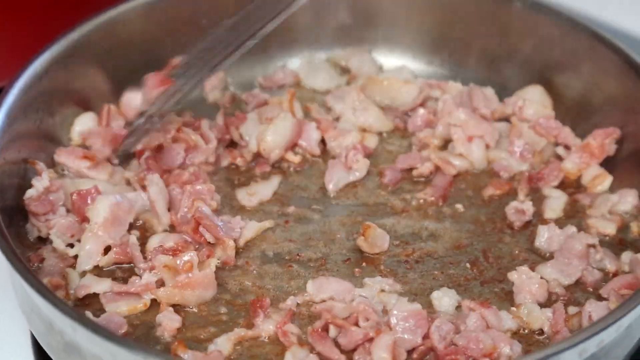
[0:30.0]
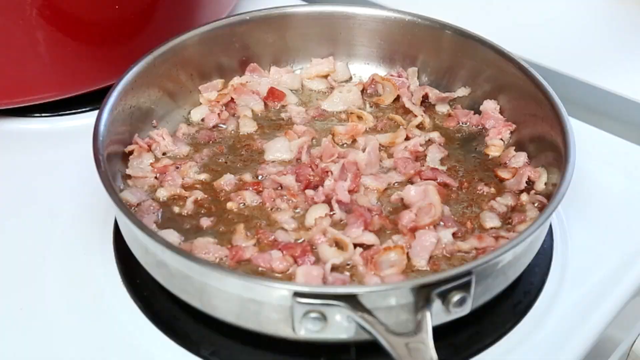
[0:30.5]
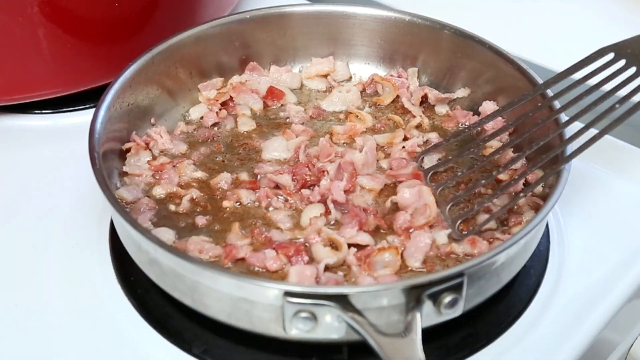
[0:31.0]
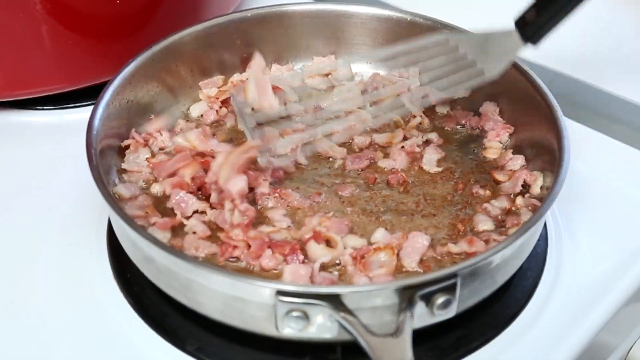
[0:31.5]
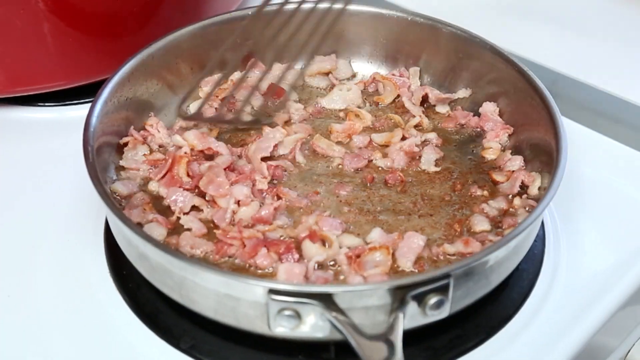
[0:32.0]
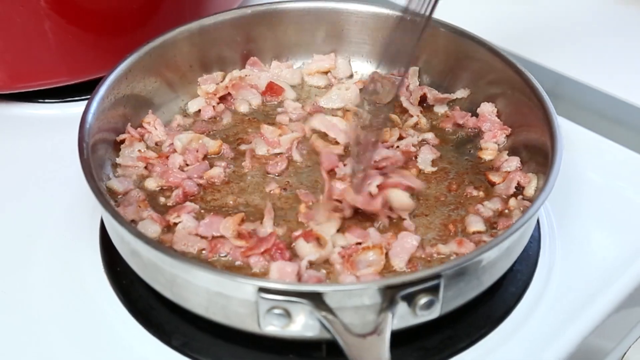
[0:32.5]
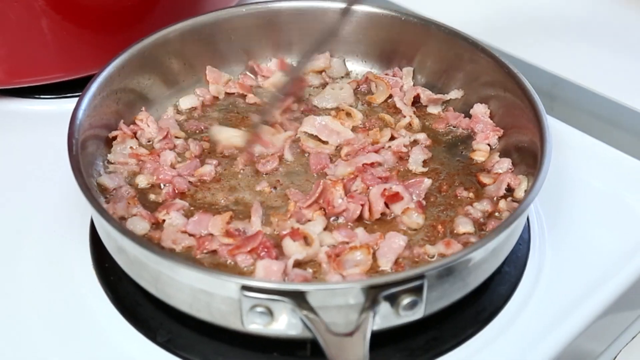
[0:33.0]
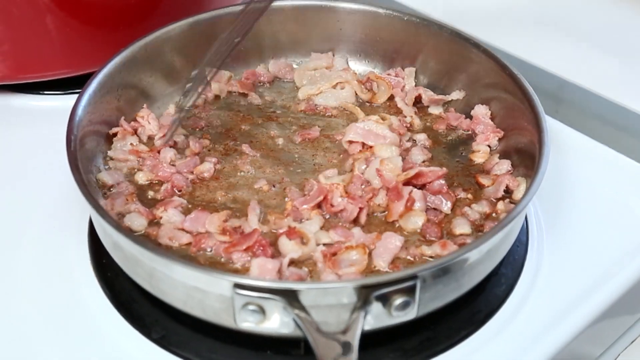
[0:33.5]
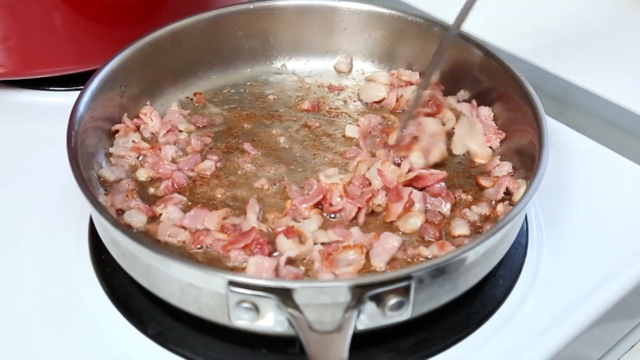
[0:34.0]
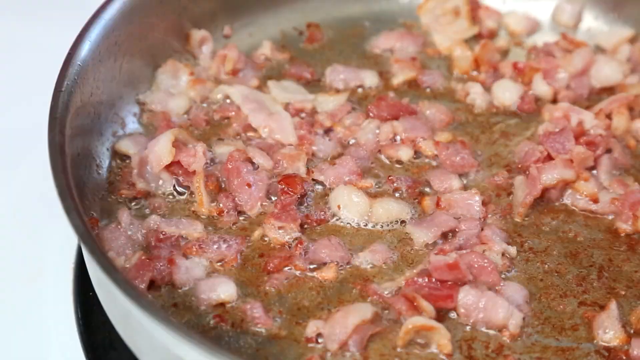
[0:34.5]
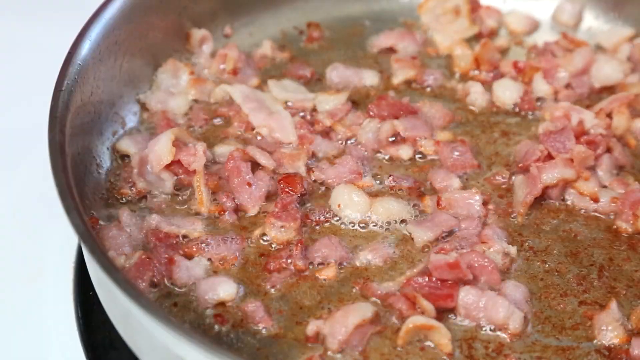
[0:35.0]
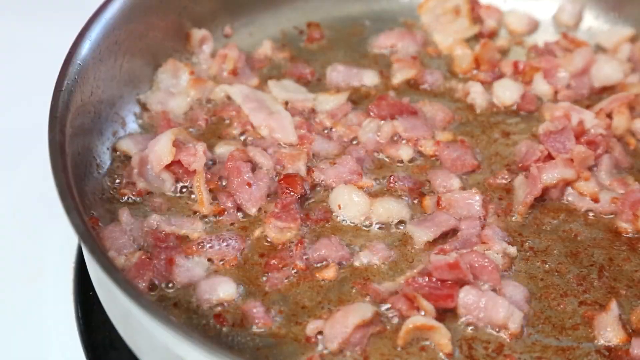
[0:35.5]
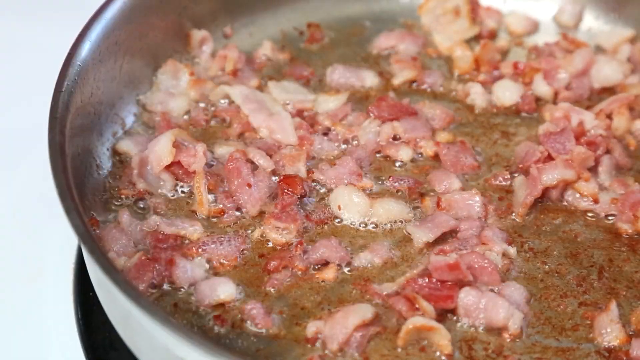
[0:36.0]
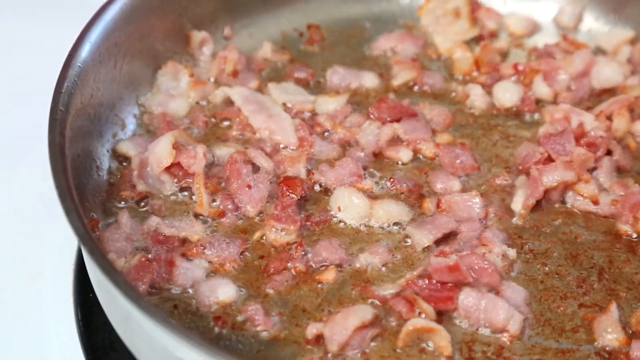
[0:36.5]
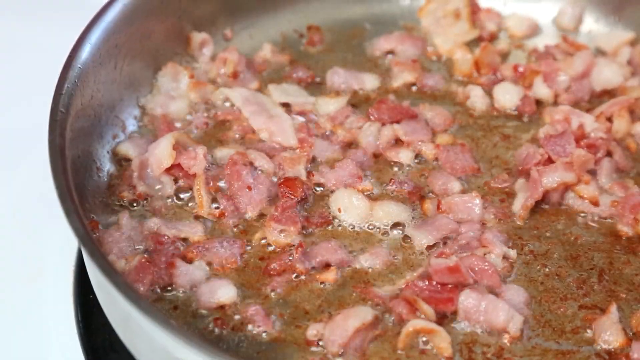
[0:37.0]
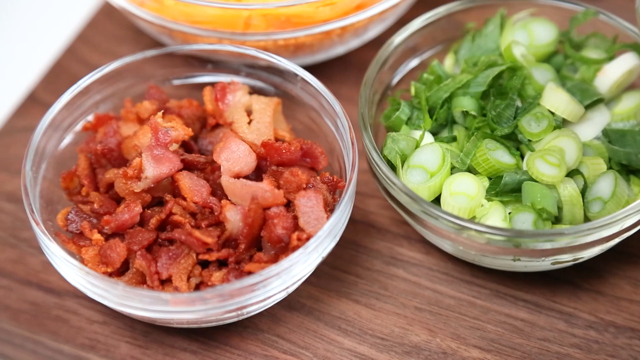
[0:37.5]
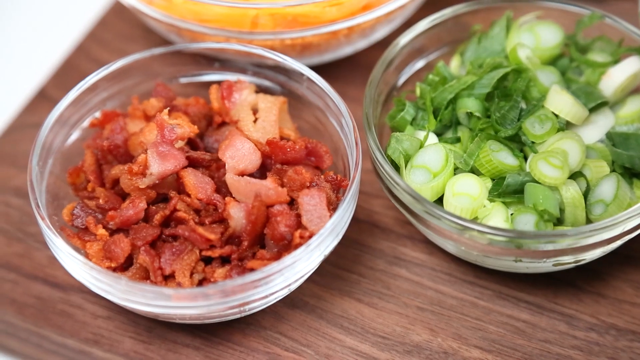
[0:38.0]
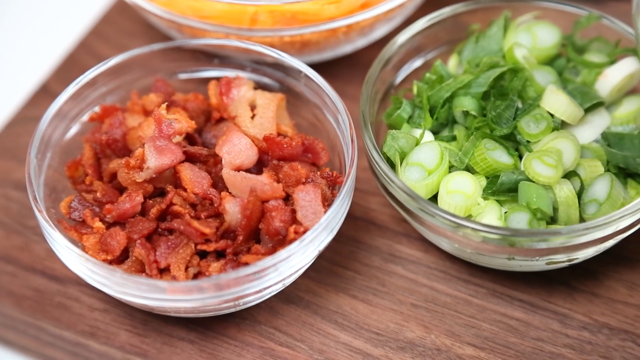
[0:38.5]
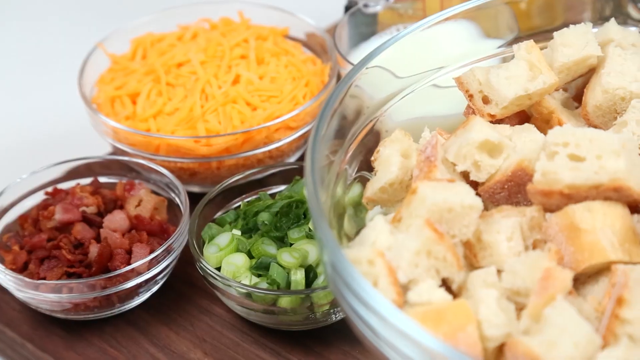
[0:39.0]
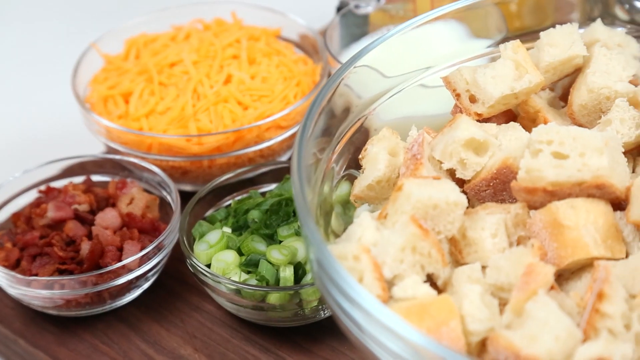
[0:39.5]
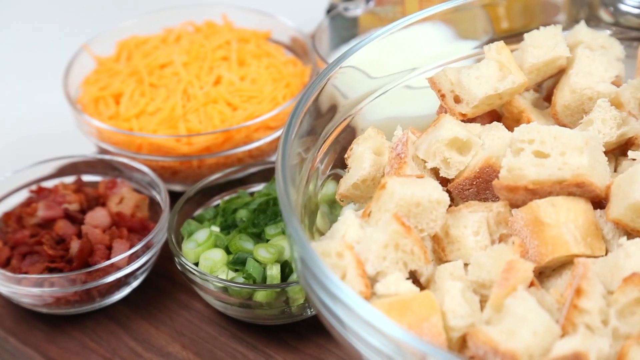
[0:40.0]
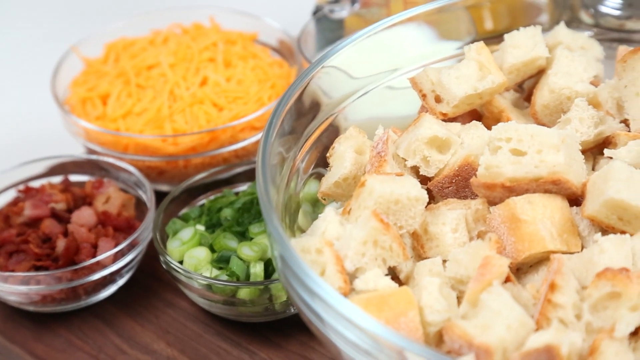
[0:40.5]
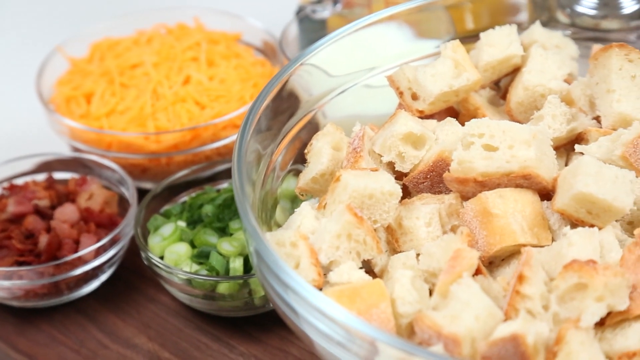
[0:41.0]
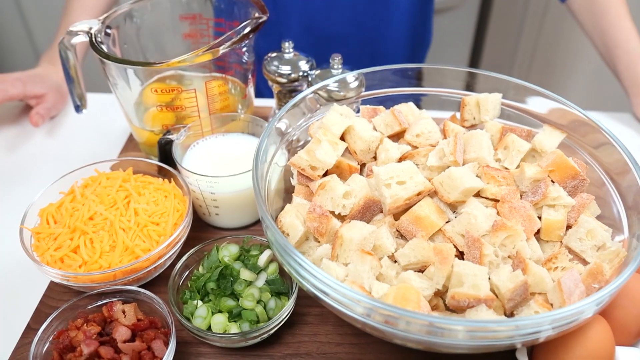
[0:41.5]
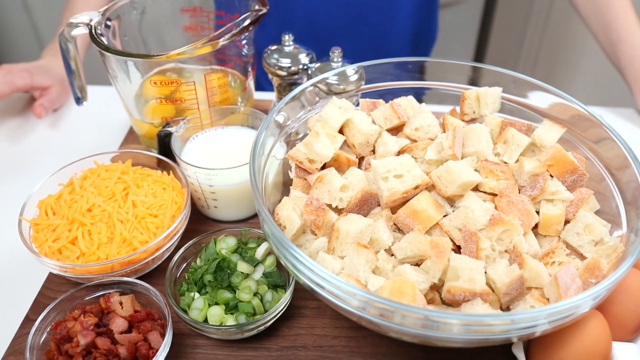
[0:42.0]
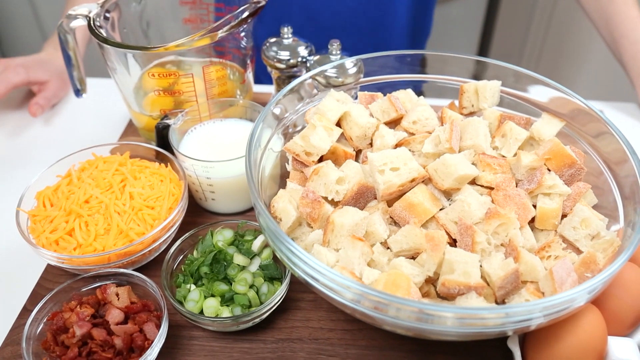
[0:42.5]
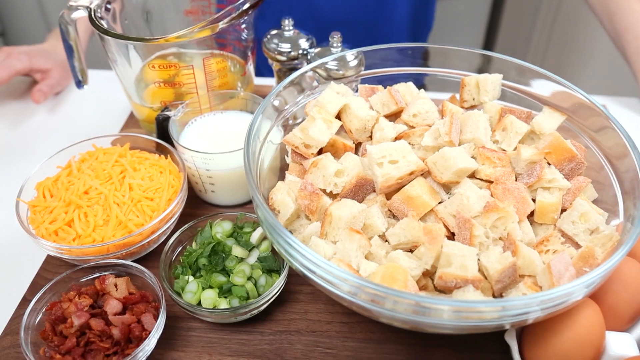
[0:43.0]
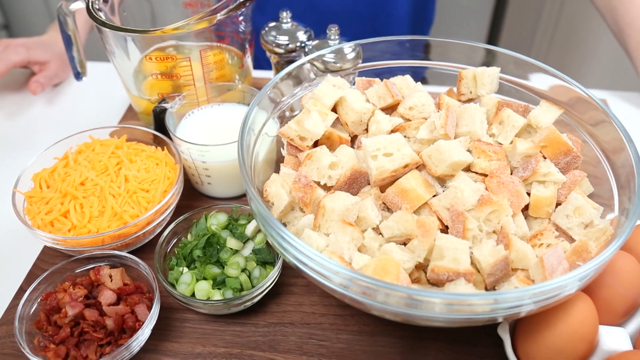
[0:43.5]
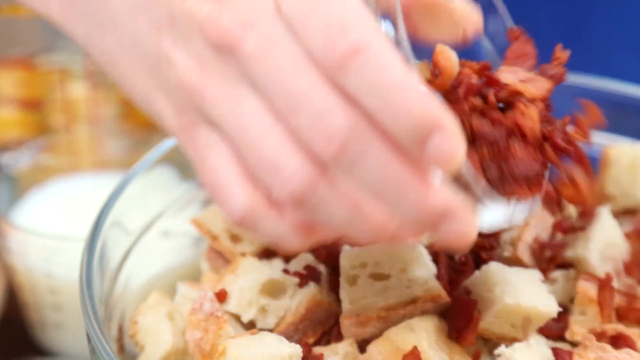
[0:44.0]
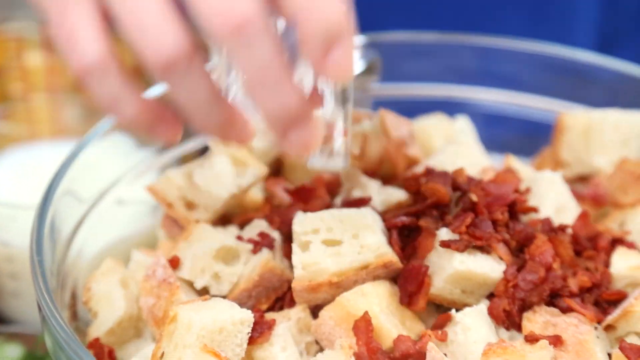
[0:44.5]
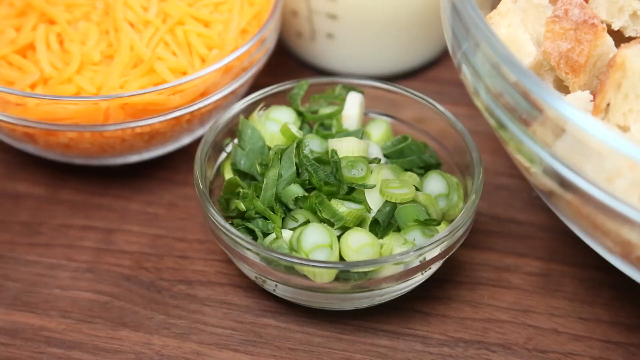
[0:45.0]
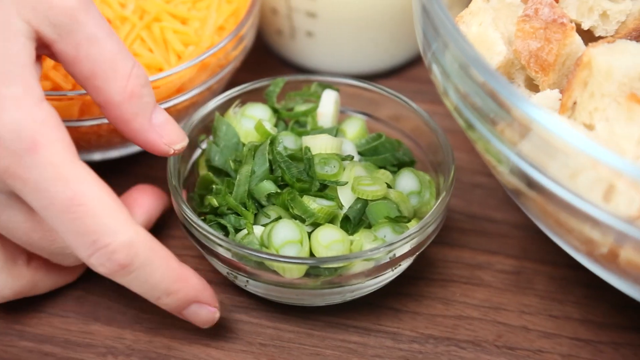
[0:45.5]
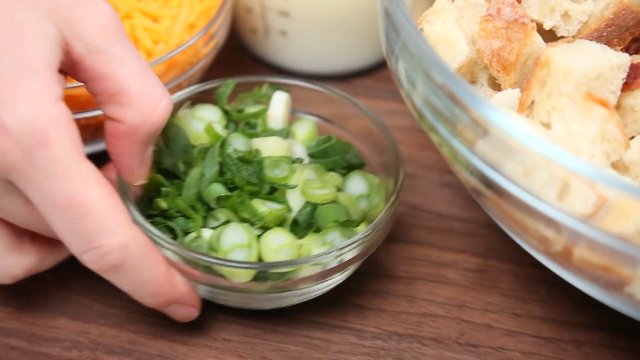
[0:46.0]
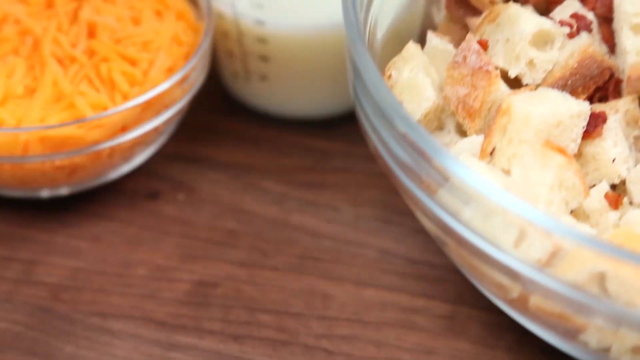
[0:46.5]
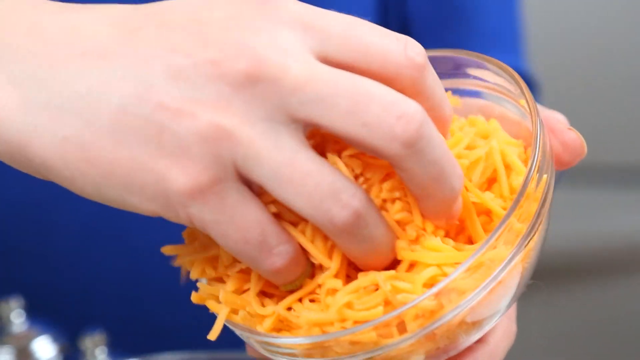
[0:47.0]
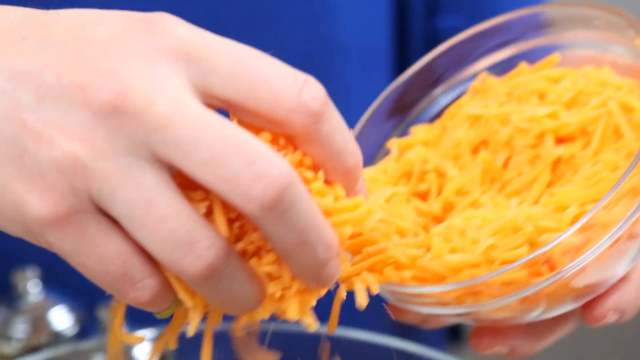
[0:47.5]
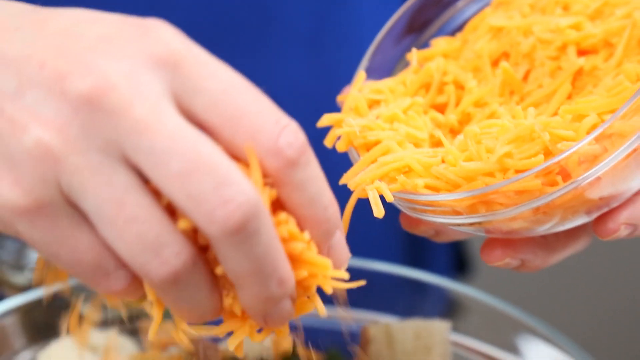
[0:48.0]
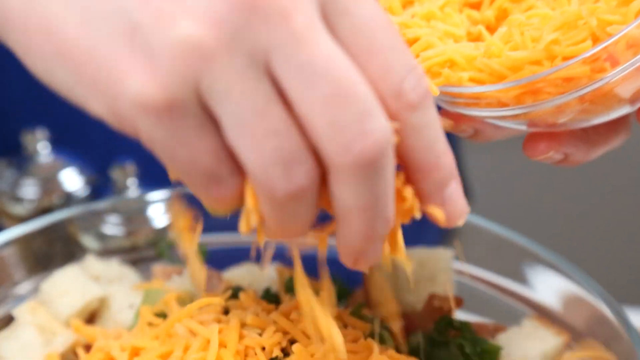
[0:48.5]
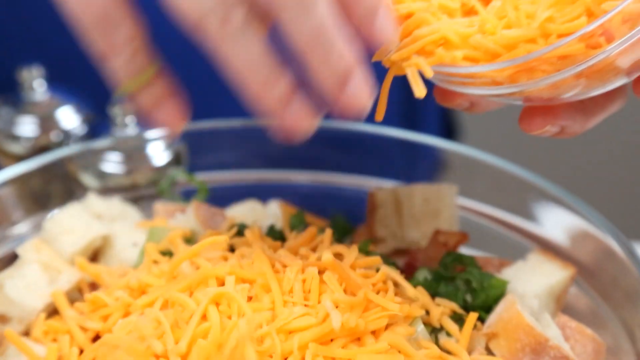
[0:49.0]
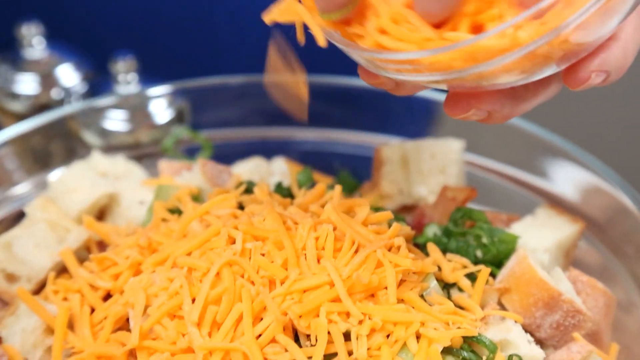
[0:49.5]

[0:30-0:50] Small diced pieces of bacon fry in a circular pan while what looks to be a metal spatula moves them around, and a close-up shows the bacon bubbling in the pan. Small clear glass bowls of bacon and chives are on a brown cutting board, along with a much larger bowl of croutons, a medium-sized bowl of cheese, and a measuring cup of liquid that possibly looks like milk. A much larger measuring cup looks to have some egg yolks in it. The camera pans around. The bacon is dumped into the large bowl, which could be cubed pieces of bread rather than croutons. A hand reaches into the bowl of bright orange-ish shredded cheese, takes a pinch and places it into the larger bowl with the bread and bacon, and then all the cheese is put in.